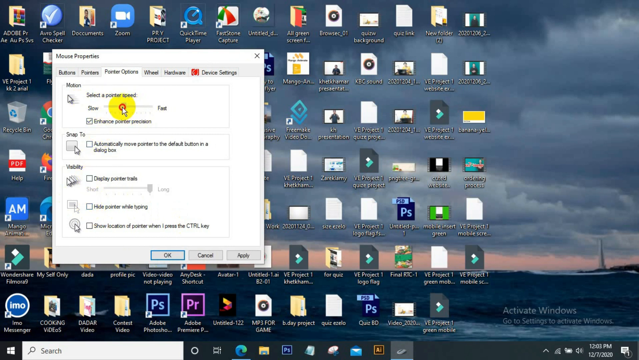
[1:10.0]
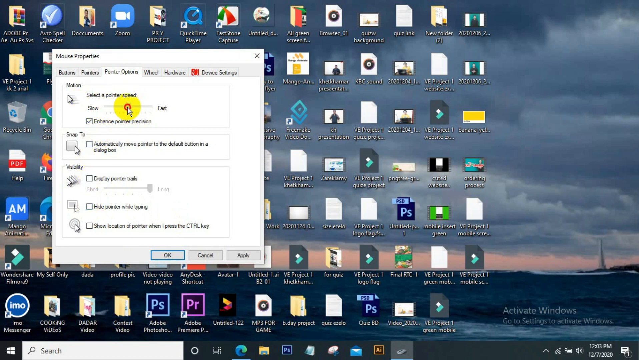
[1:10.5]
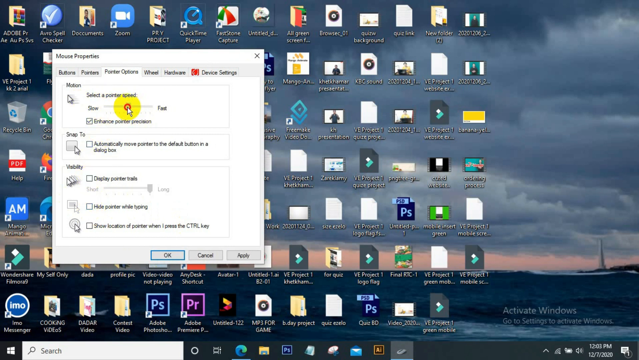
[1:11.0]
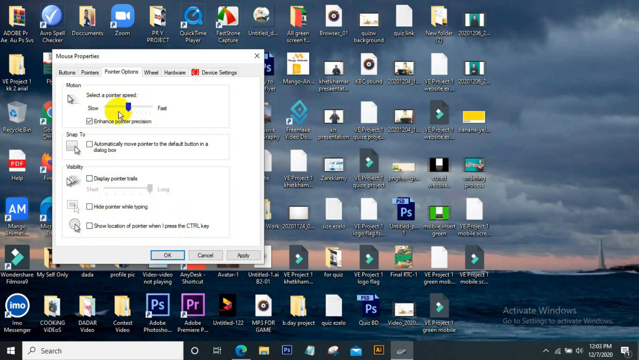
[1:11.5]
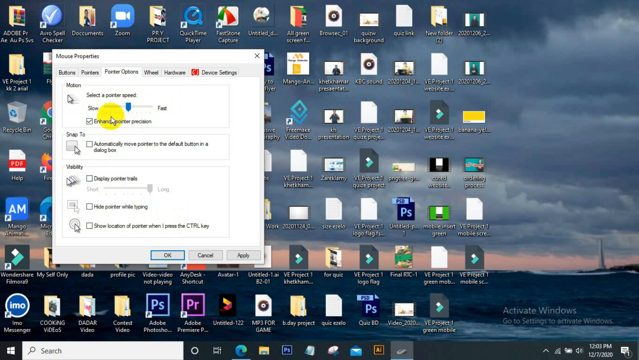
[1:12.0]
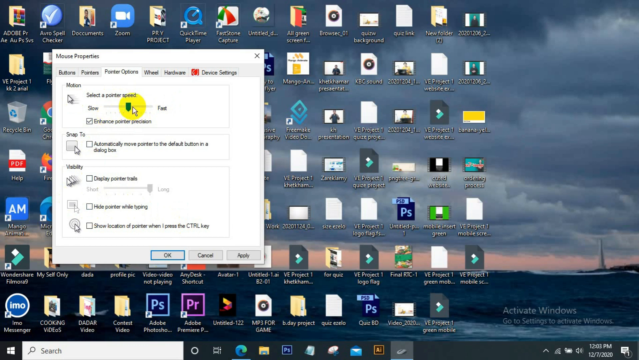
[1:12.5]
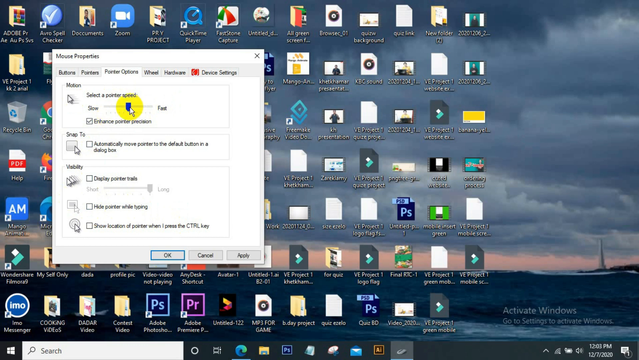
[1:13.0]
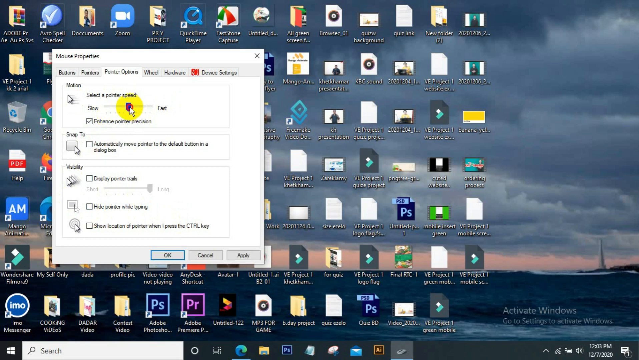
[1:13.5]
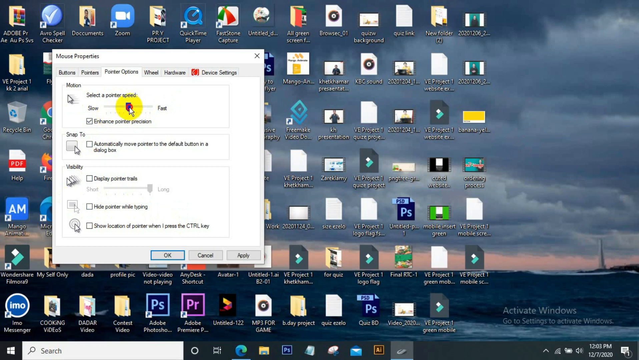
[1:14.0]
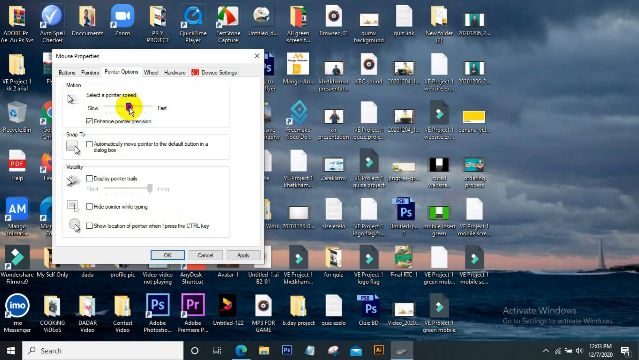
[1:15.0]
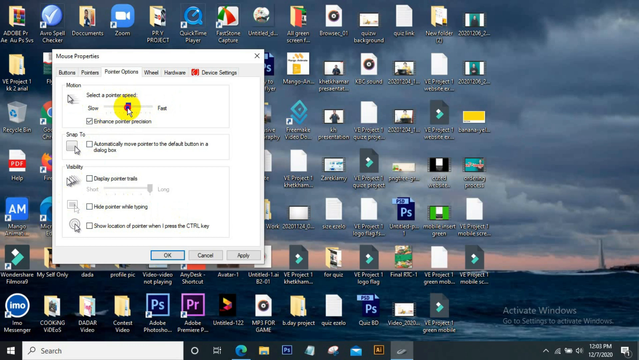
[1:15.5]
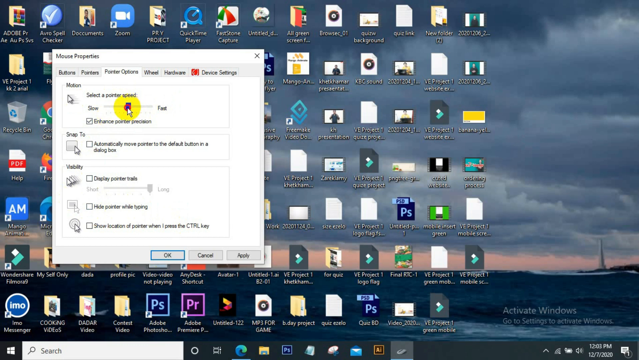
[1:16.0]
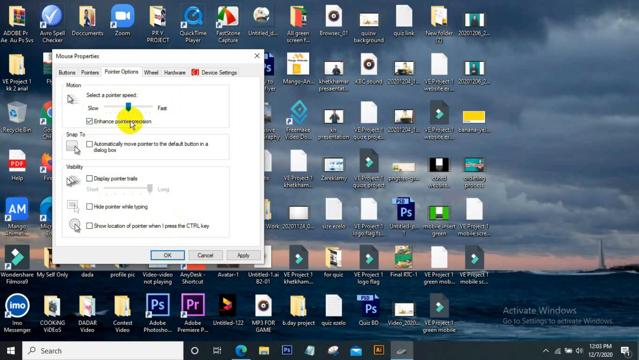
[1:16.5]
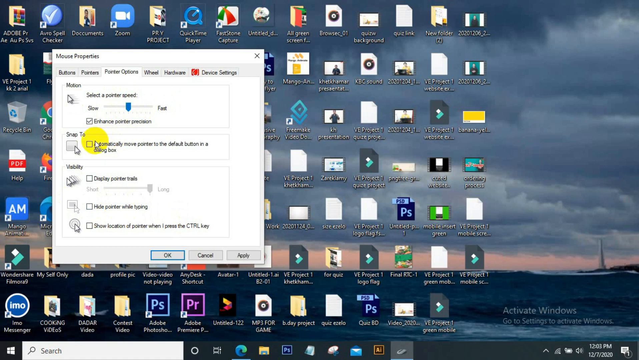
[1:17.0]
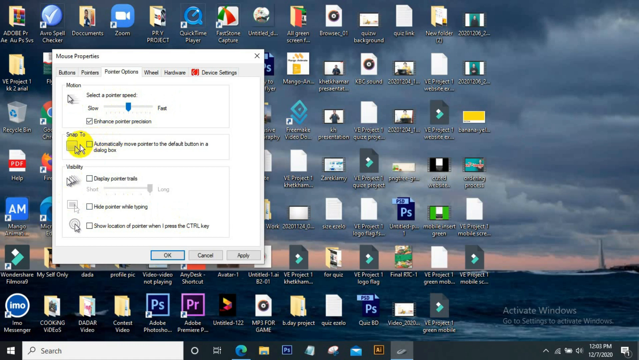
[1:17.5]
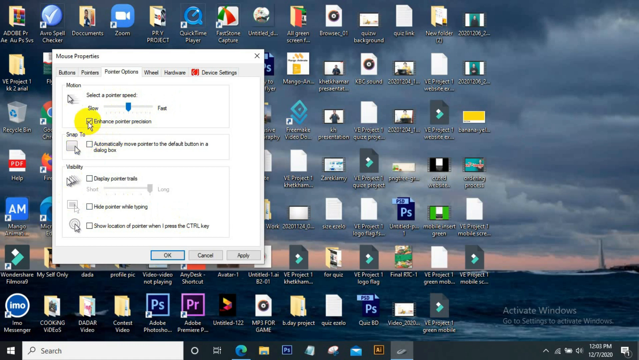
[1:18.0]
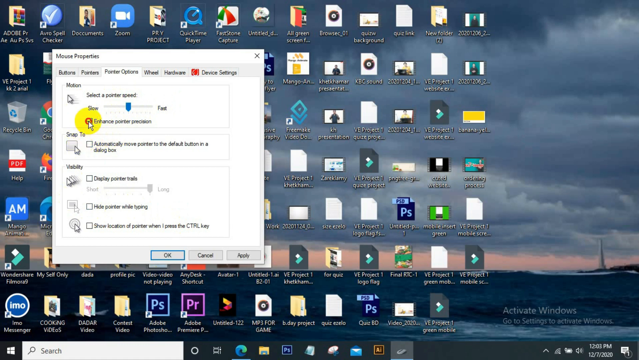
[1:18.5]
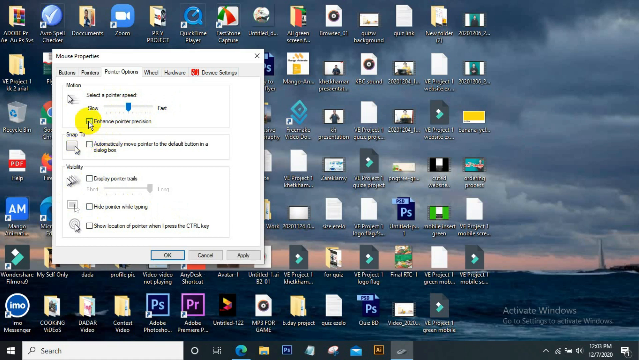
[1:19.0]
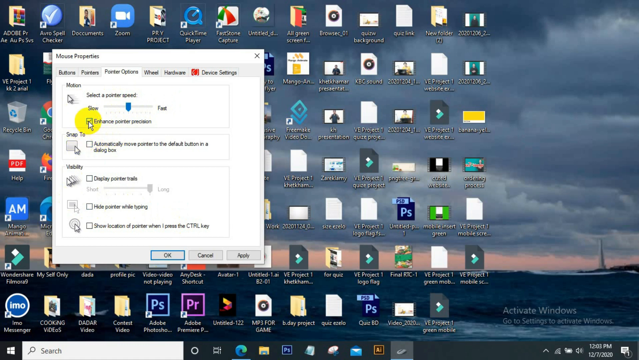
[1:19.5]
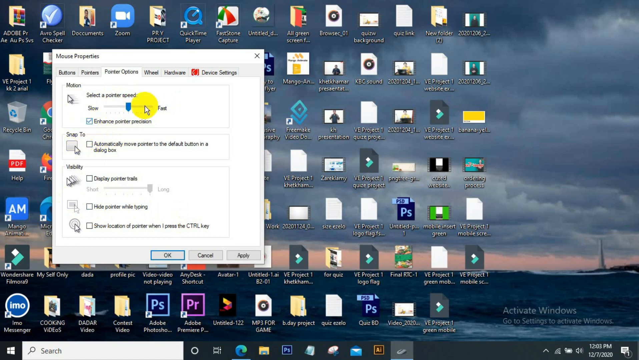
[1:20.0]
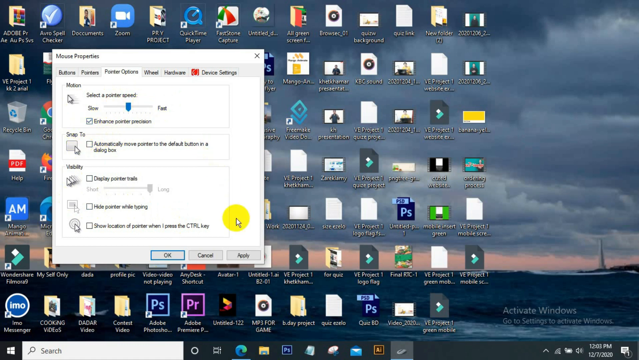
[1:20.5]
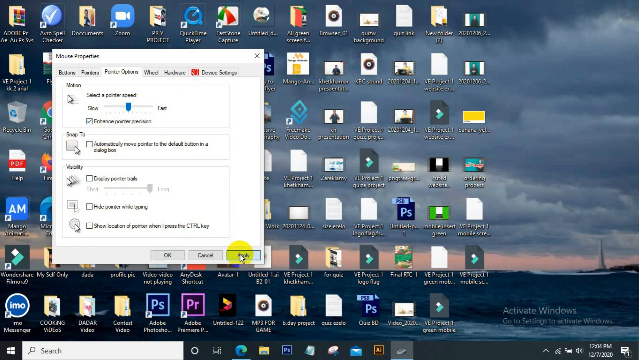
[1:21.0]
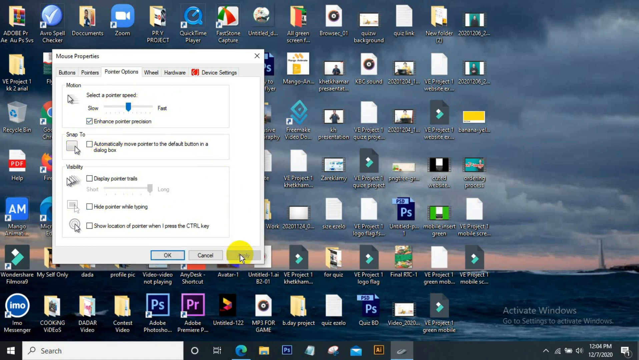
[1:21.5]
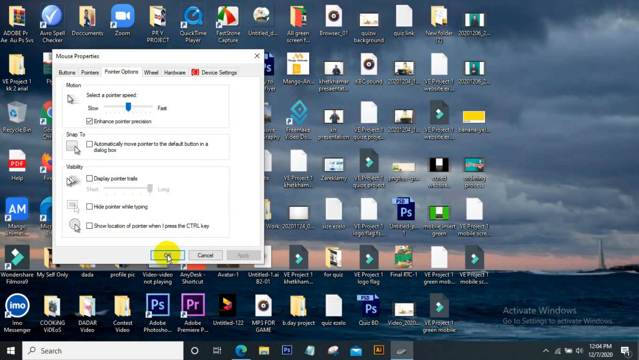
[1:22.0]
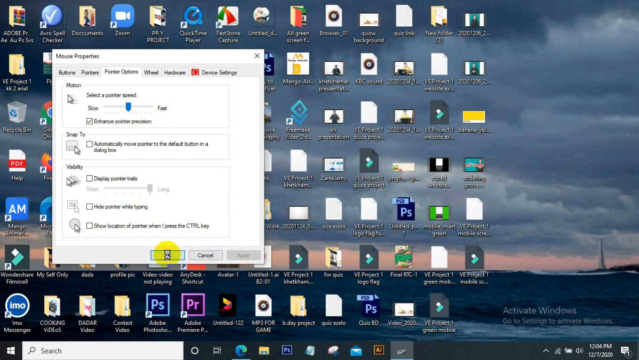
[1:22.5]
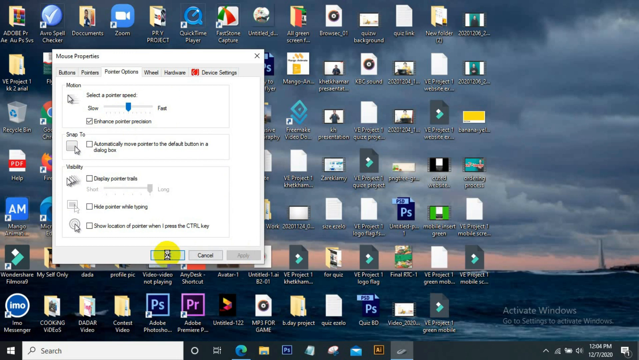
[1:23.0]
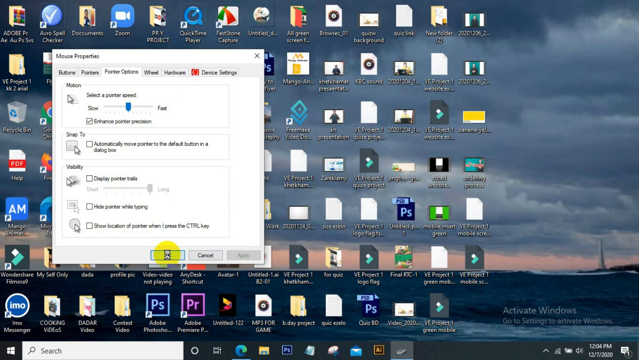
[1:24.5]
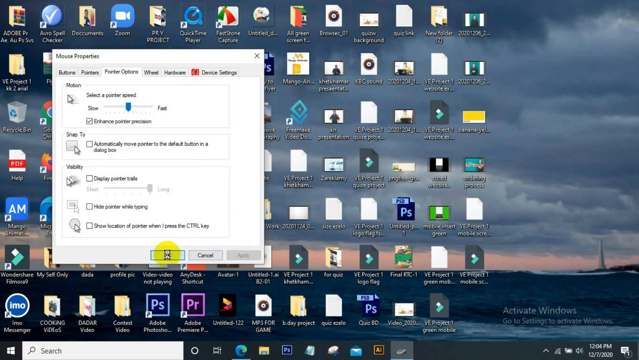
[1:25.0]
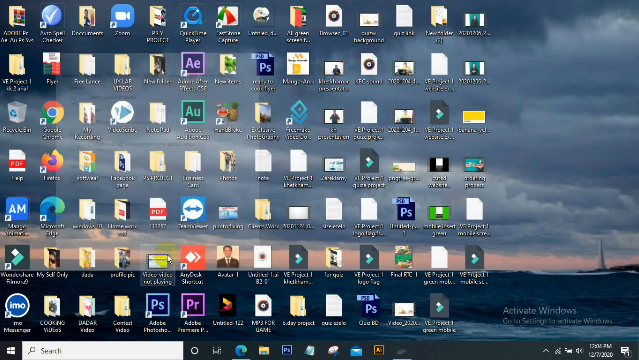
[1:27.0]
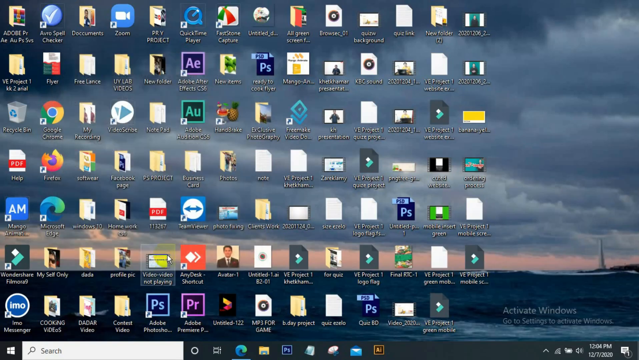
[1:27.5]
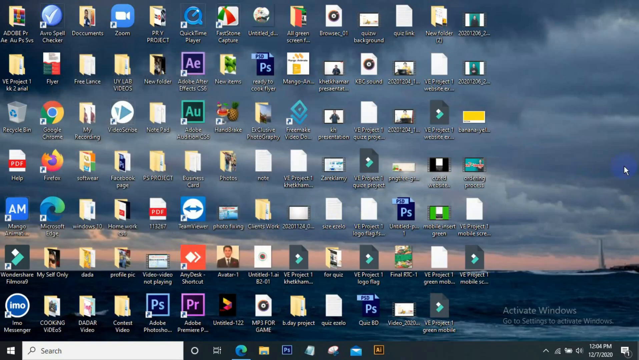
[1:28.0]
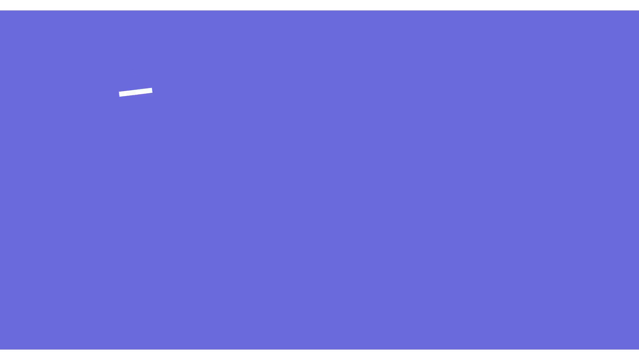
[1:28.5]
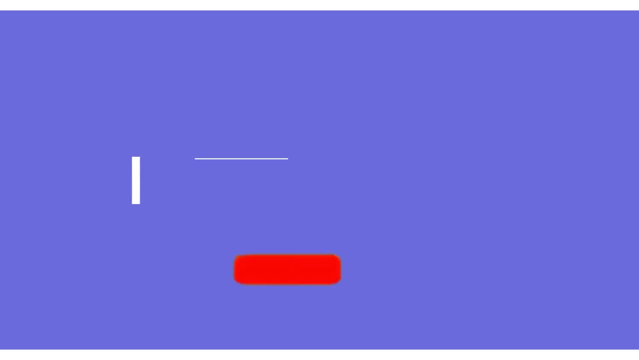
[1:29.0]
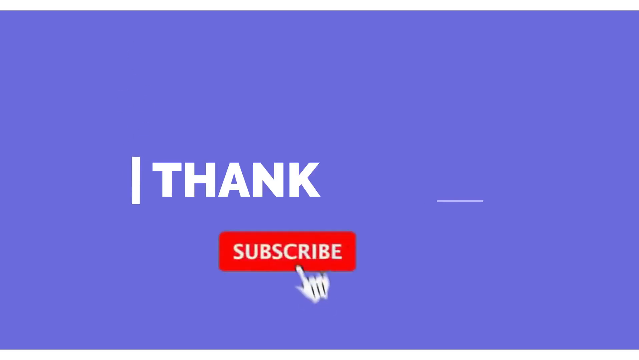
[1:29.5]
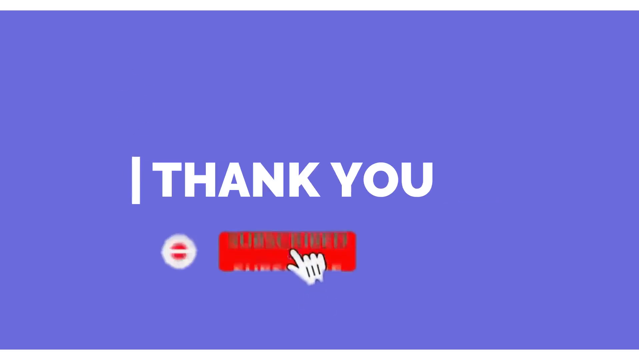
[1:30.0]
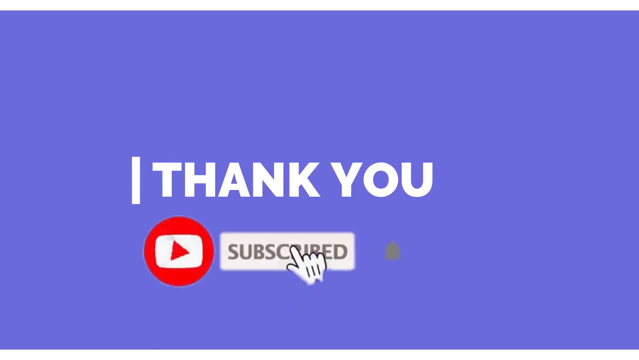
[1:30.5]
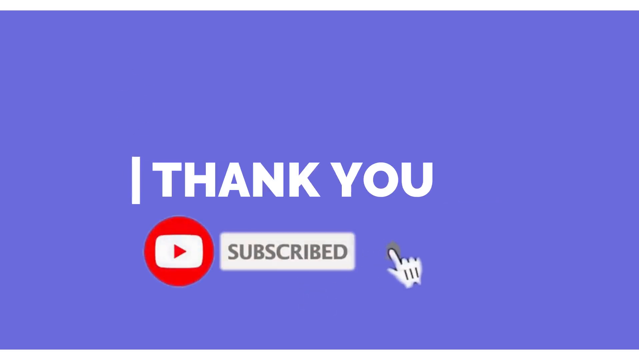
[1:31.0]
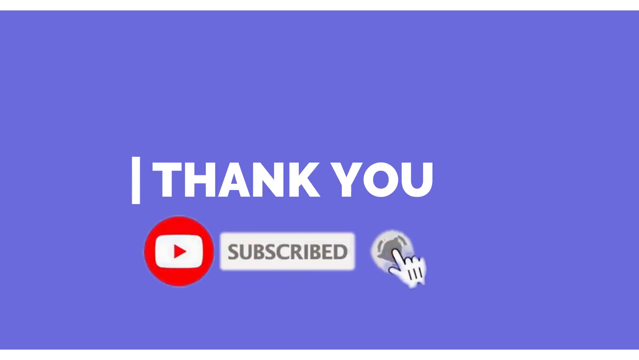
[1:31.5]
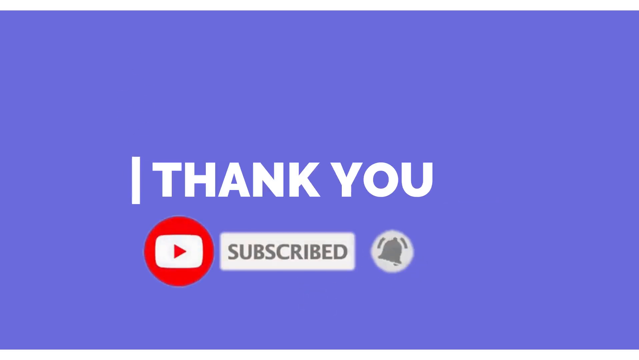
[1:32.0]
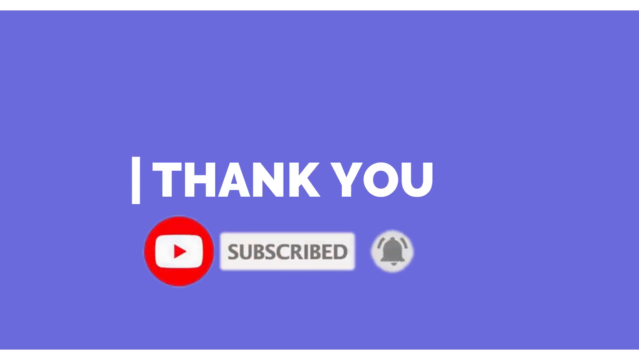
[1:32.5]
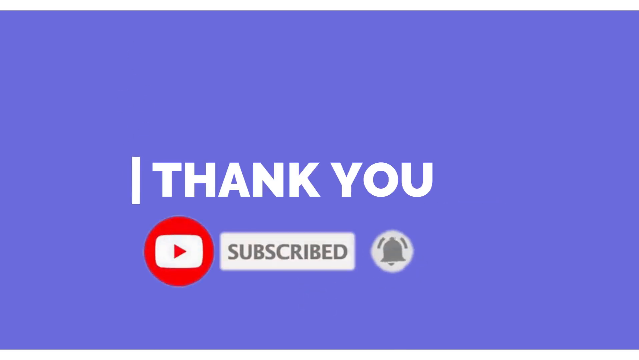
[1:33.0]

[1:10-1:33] The user slides the pointer speed option back toward the middle and fine-tunes it. They uncheck the option beneath, titled "Enhance Pointer Precision," recheck it right away, and move the mouse down to the OK button in the gray dialog window. After OK is clicked, the screen turns purple and white letters reading "THANK YOU" pop up in an animated way from a lower portion of the screen. A YouTube icon followed by a subscribe button and a bell icon appear, and an animated cursor hovers over the subscribe button, clicks it, moves to the right, and clicks the alert bell. The tutorial appears to be over; the cursor moves out of view, leaving only the thank-you message and subscribe buttons on the purple background, apparently an end card for a YouTube video.